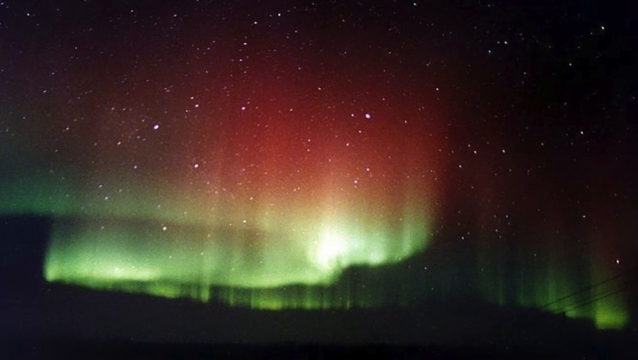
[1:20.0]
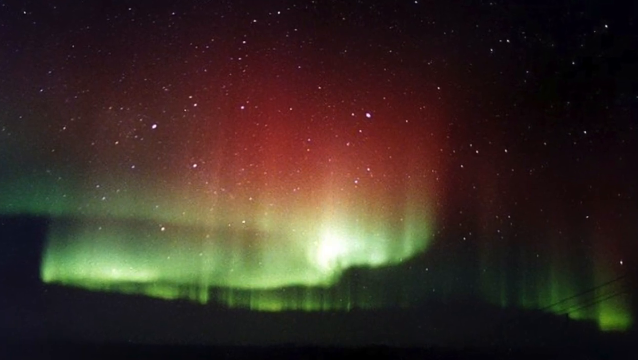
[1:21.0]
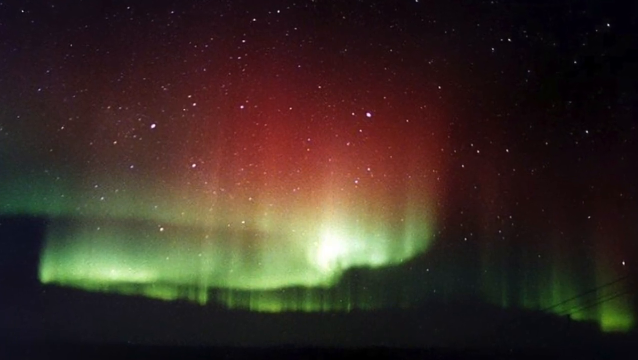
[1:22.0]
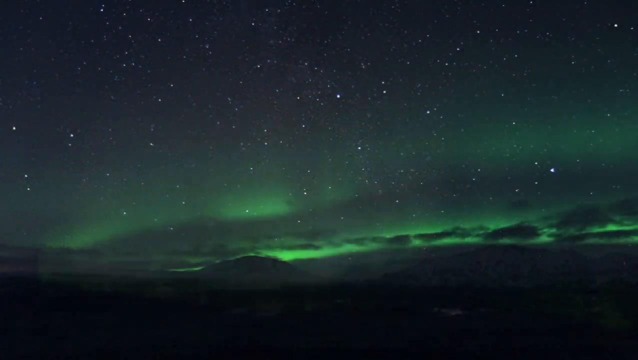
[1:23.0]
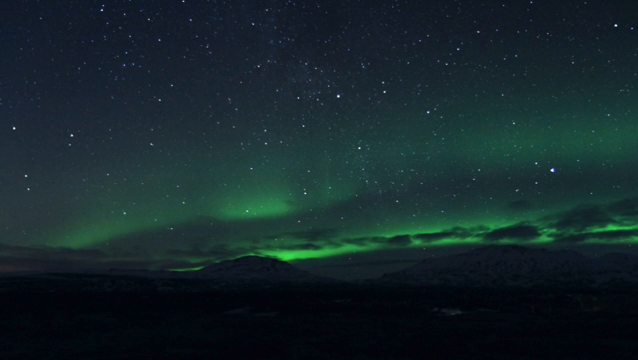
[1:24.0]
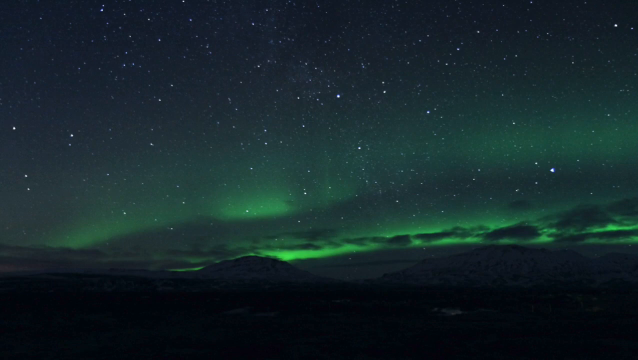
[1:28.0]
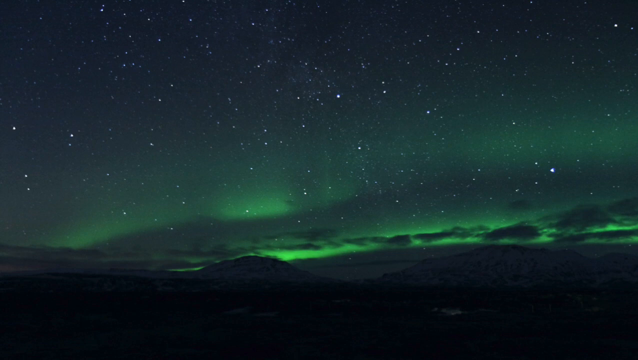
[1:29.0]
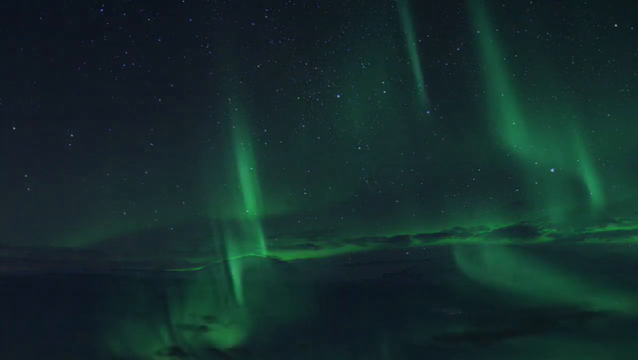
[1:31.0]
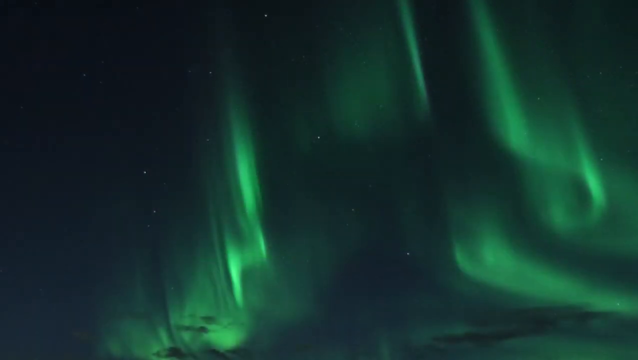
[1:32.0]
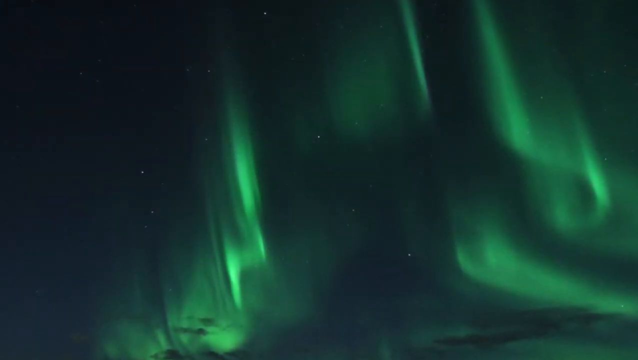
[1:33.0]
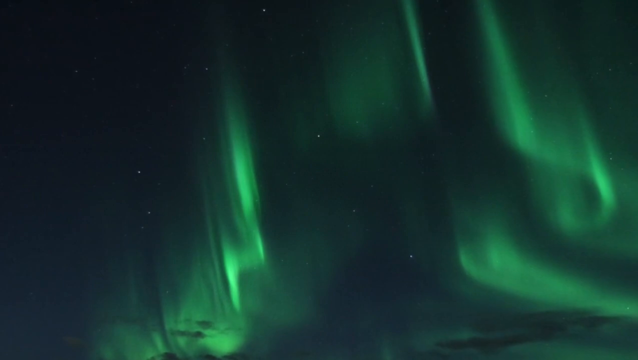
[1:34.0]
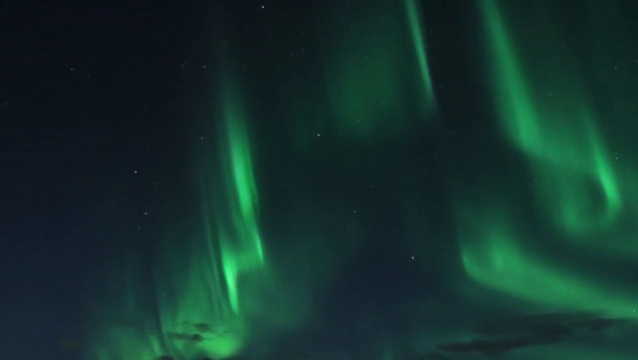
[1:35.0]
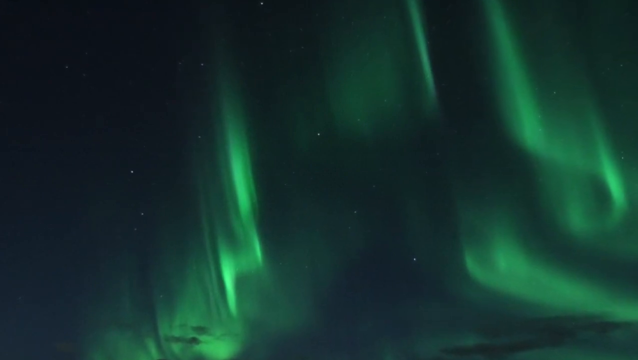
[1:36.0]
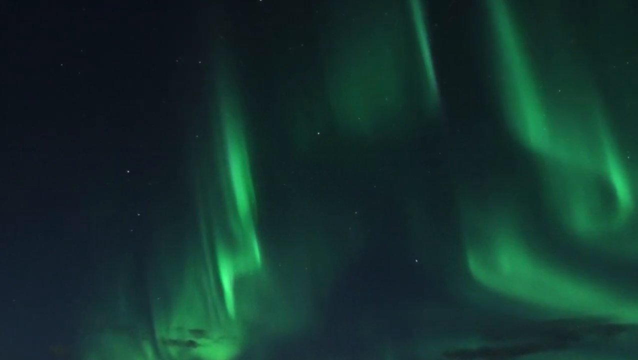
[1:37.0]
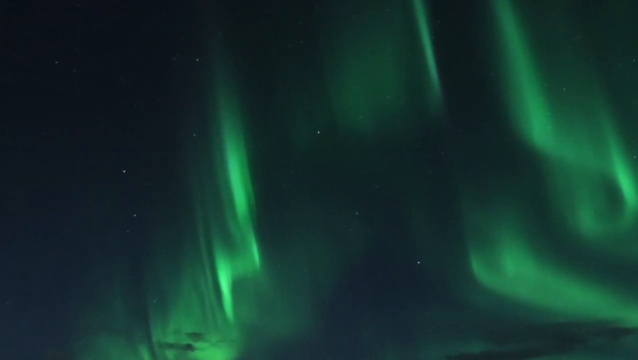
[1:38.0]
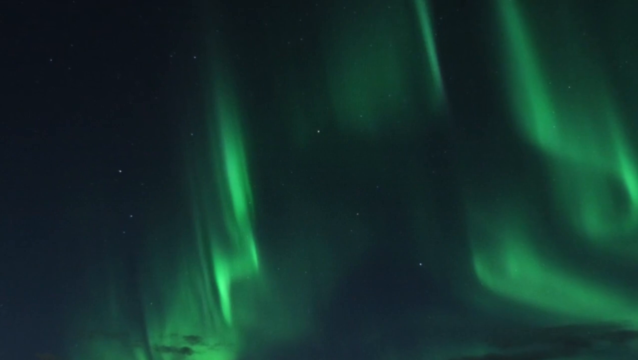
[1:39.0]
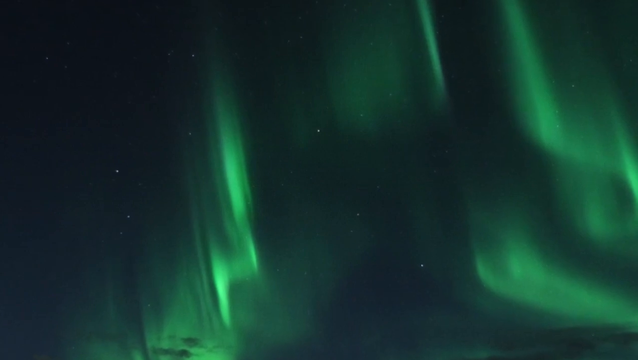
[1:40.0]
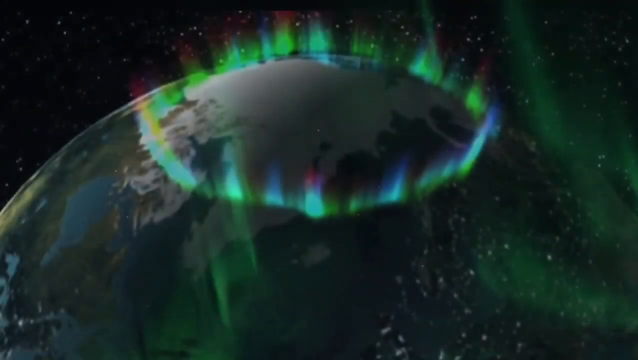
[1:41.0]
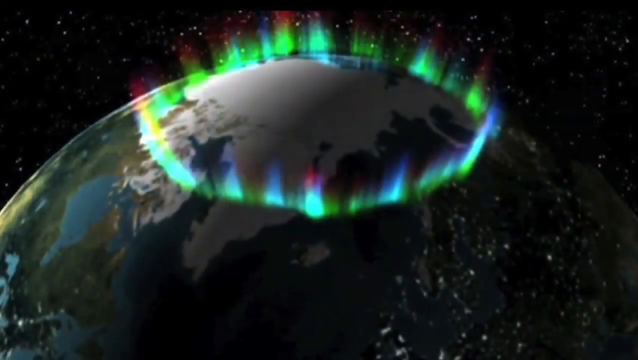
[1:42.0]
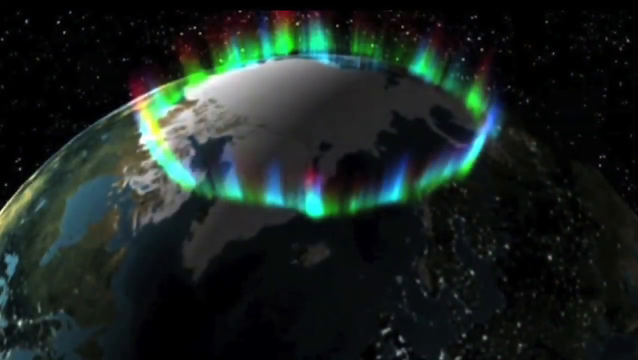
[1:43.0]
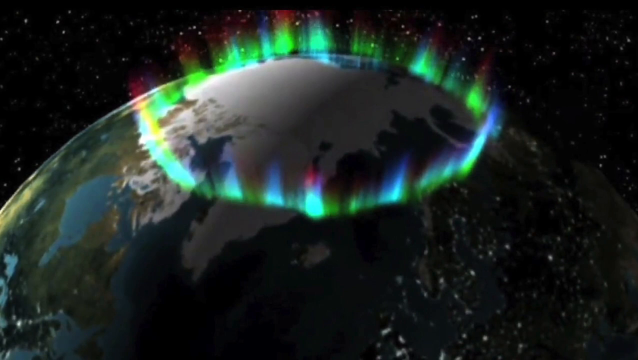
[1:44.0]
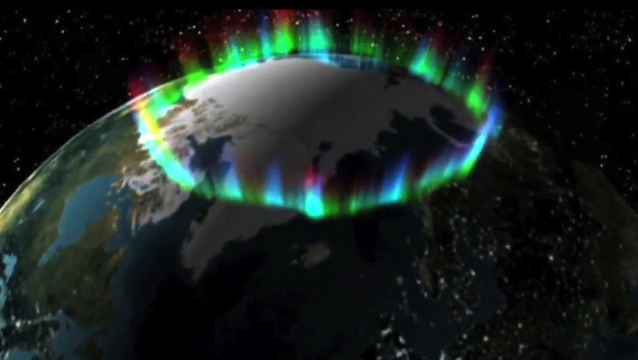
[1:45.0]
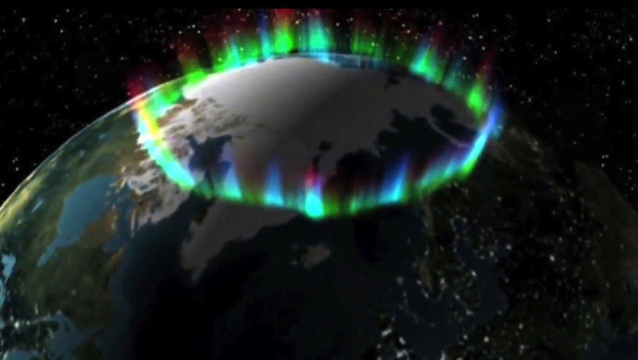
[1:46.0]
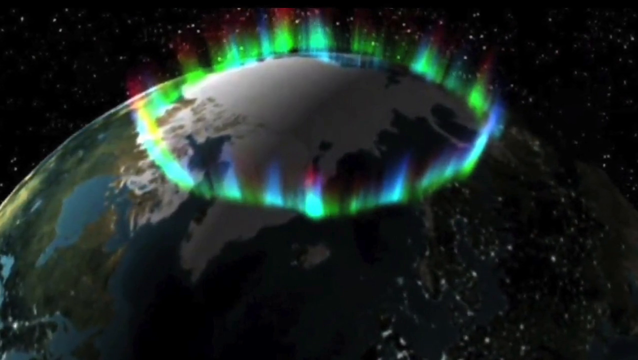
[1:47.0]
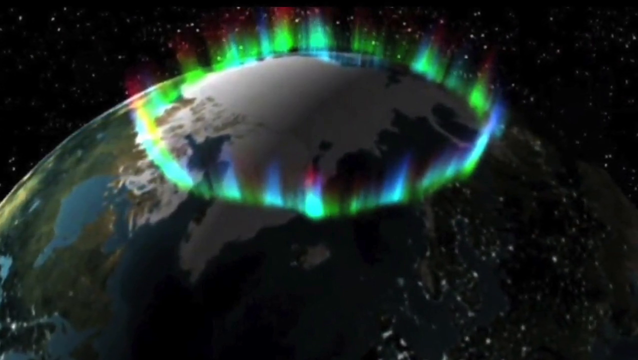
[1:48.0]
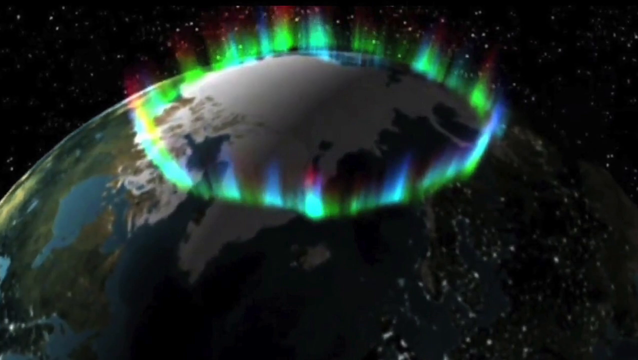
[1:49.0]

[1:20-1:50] Green lights mixed with purple and red look like moving curtains or waves that keep changing shape. The view seems to be from the sky, as the screen is littered with shiny dots that apparently represent stars. Later the screen shows only green colors mixed with the stars; no trees are visible, so this shot also seems to be taken from the sky. An aurora effect makes the sky seem to have a green curtain or green webs, with a few stars in the background, and the area with the green curtain keeps zooming in. Later a picture of the Earth from space appears, with a circular image containing blue, green and purple colors on the north pole.